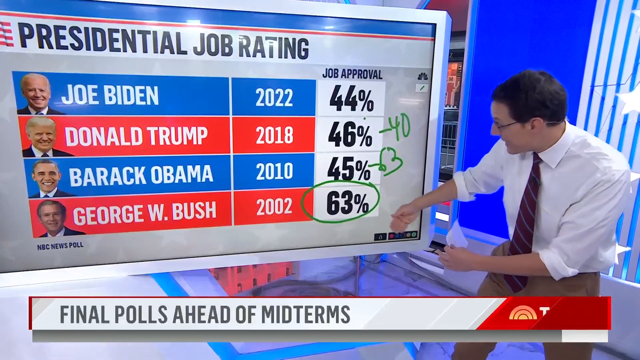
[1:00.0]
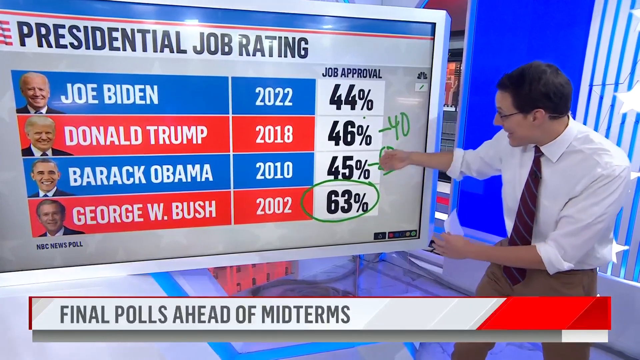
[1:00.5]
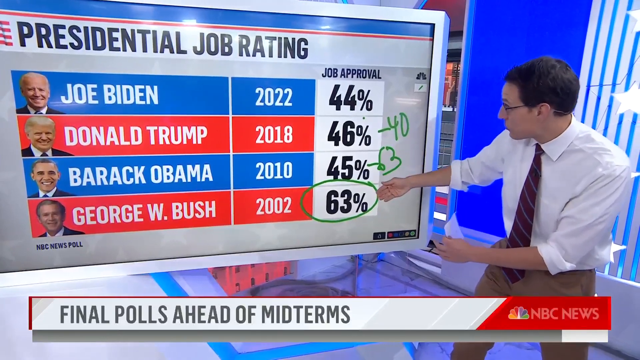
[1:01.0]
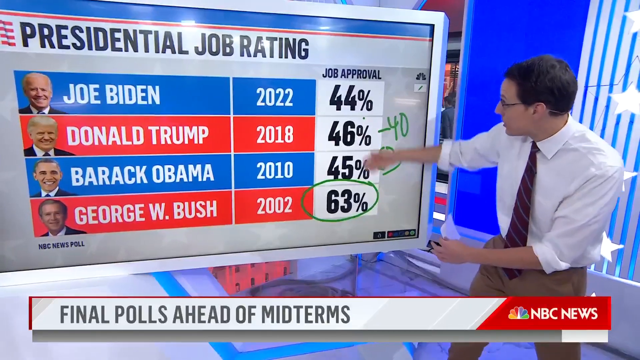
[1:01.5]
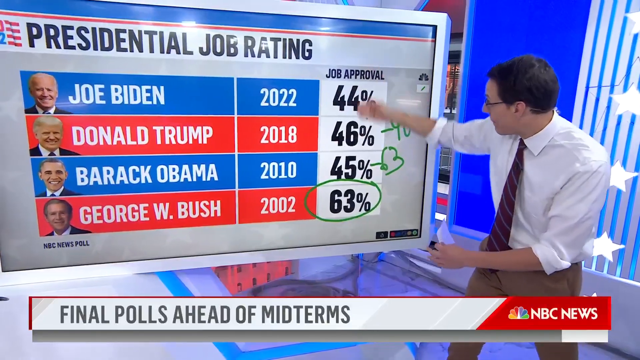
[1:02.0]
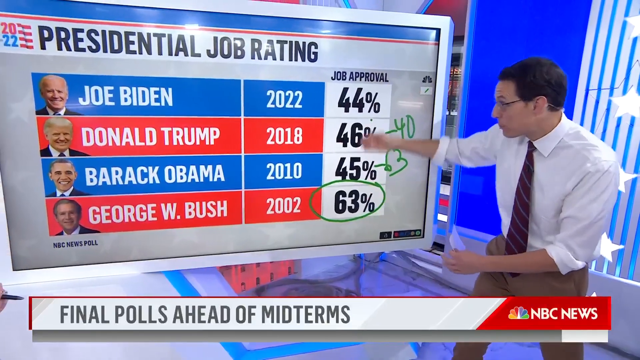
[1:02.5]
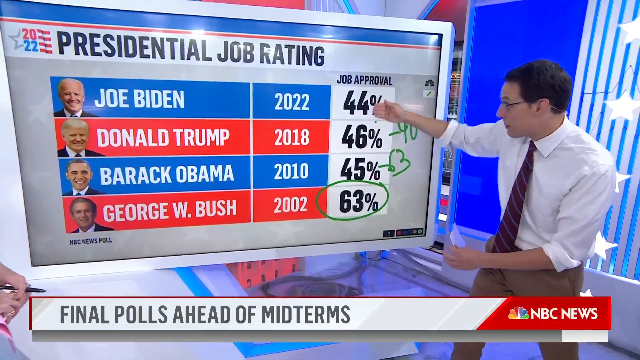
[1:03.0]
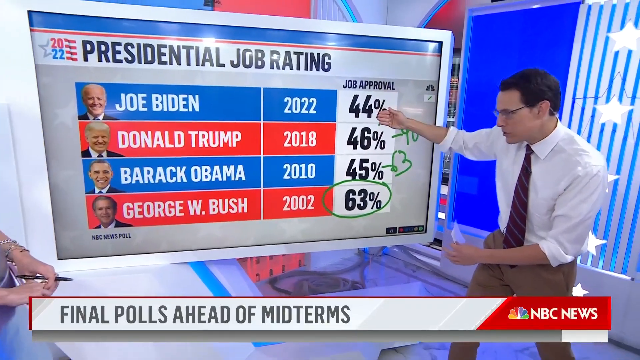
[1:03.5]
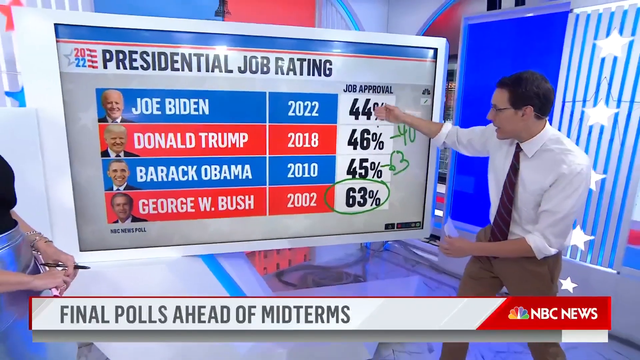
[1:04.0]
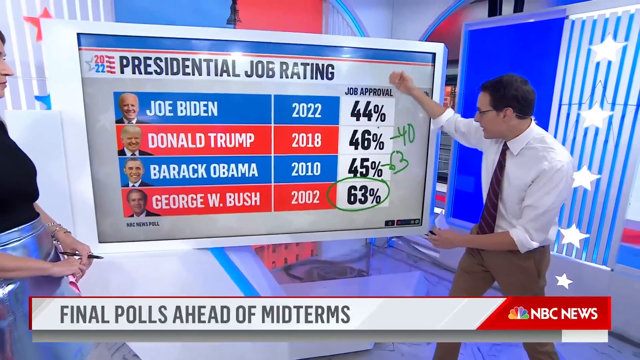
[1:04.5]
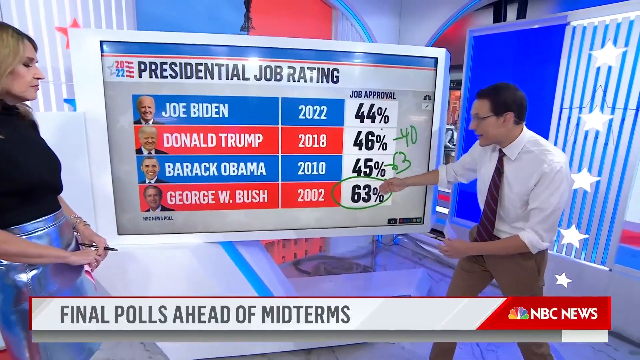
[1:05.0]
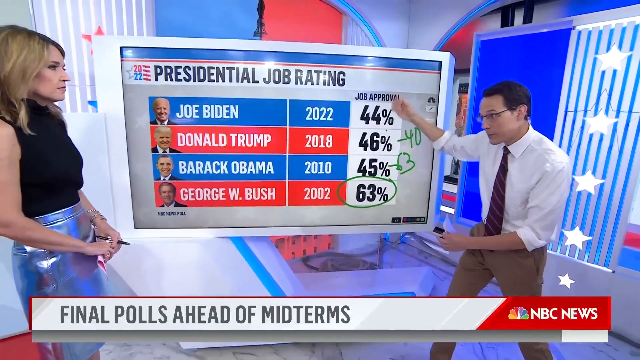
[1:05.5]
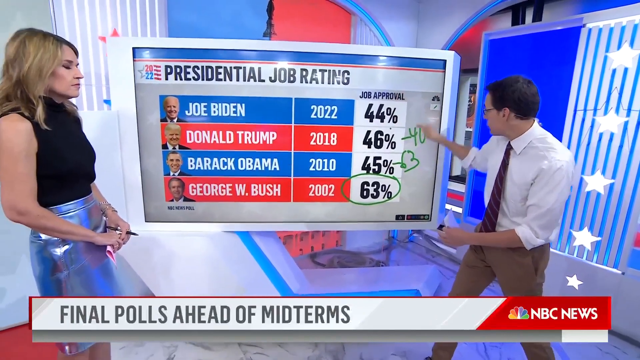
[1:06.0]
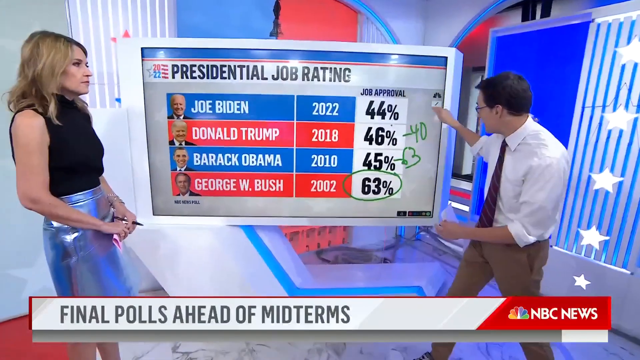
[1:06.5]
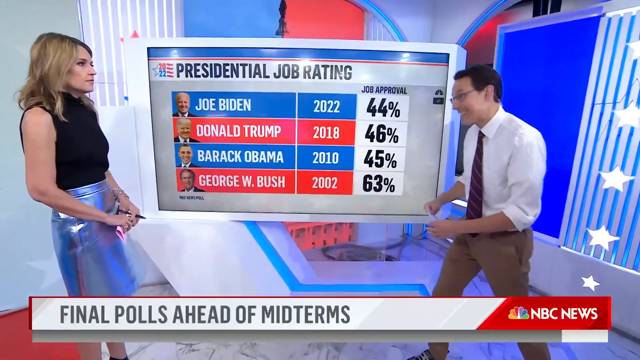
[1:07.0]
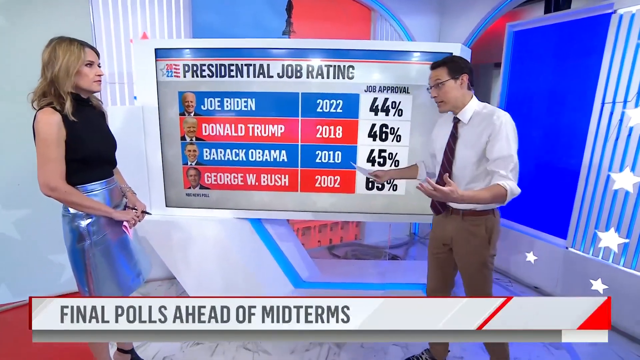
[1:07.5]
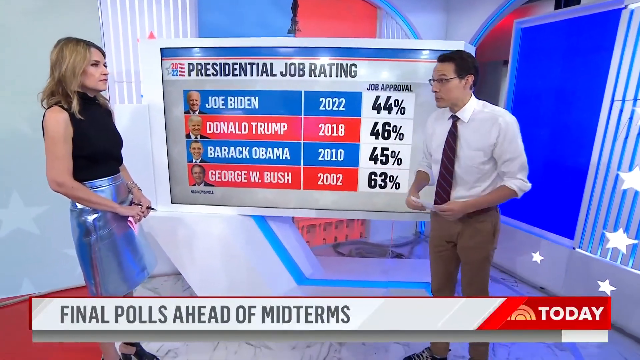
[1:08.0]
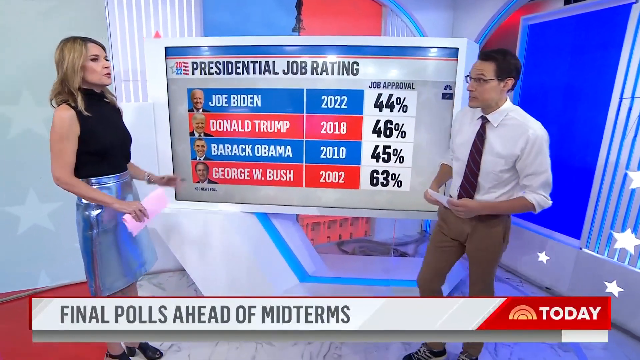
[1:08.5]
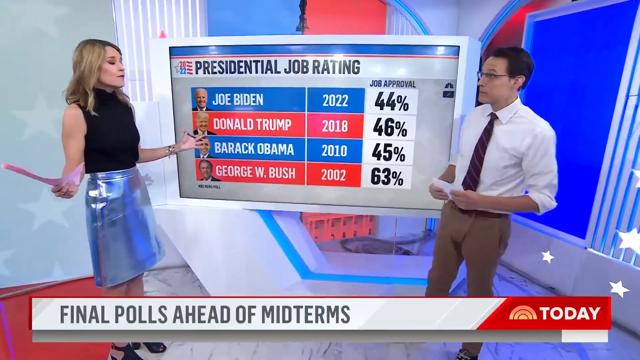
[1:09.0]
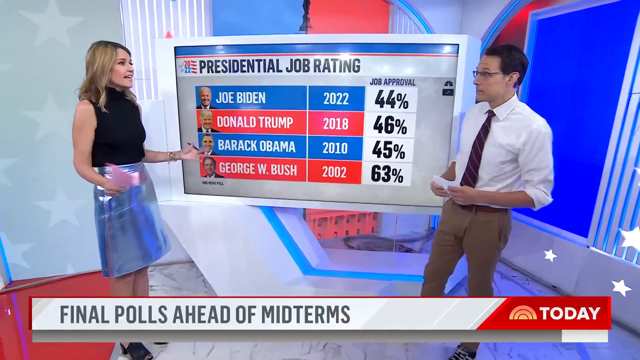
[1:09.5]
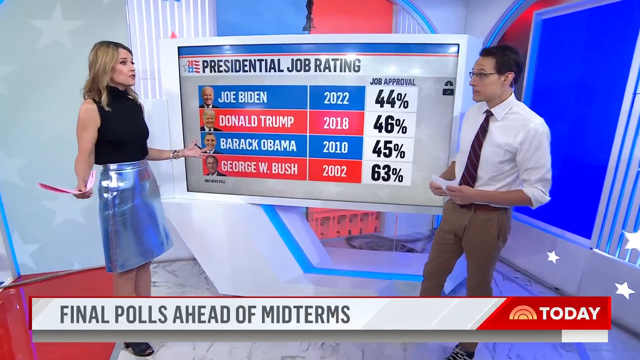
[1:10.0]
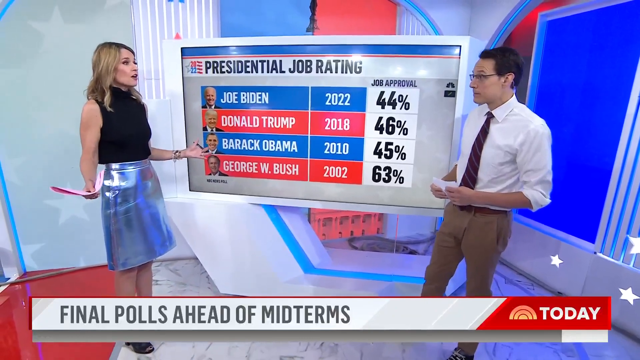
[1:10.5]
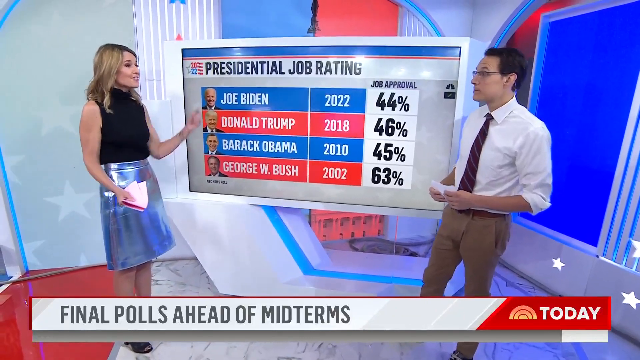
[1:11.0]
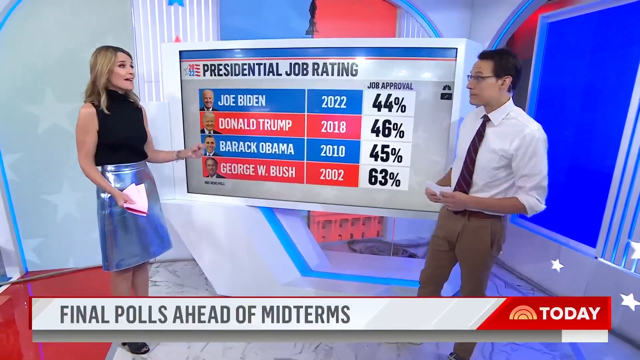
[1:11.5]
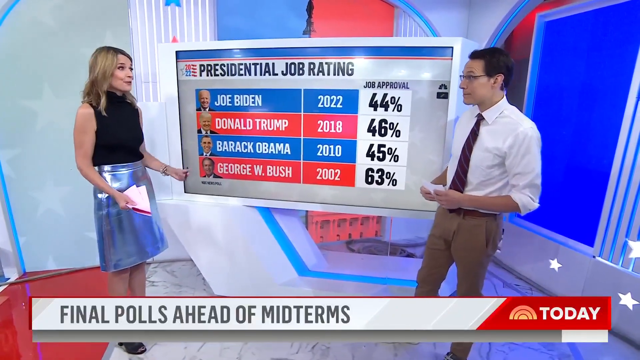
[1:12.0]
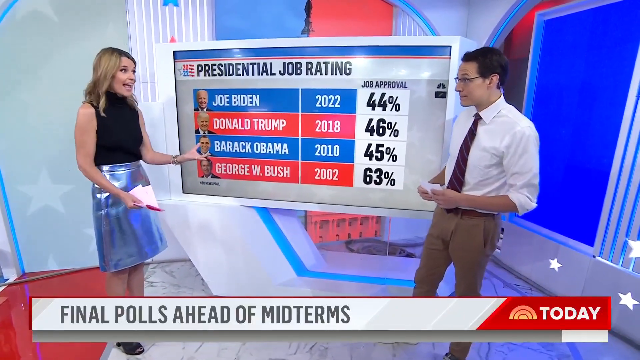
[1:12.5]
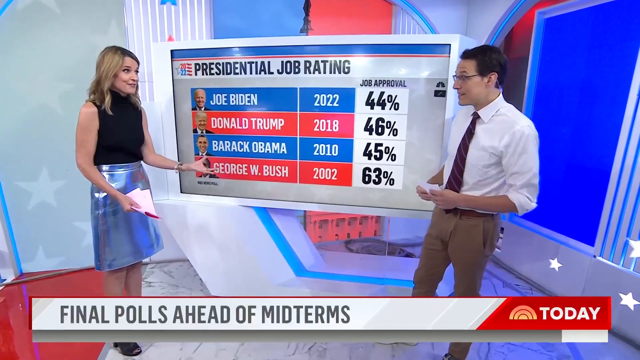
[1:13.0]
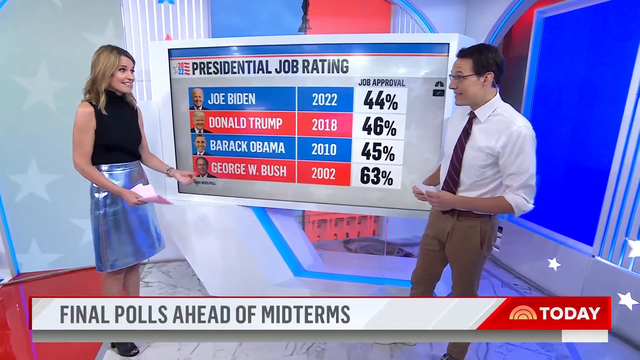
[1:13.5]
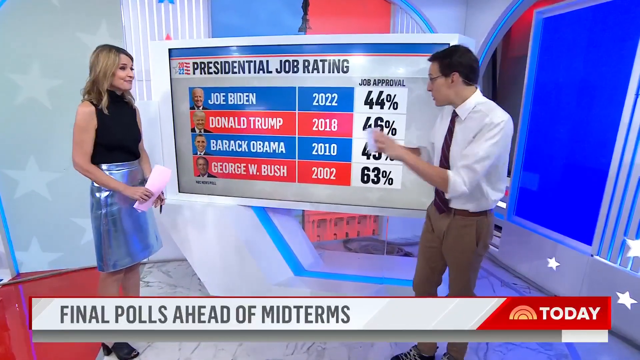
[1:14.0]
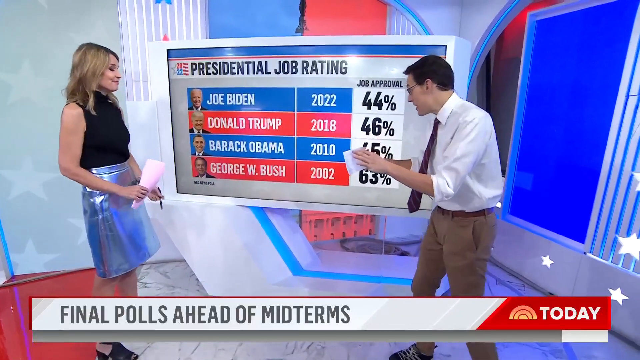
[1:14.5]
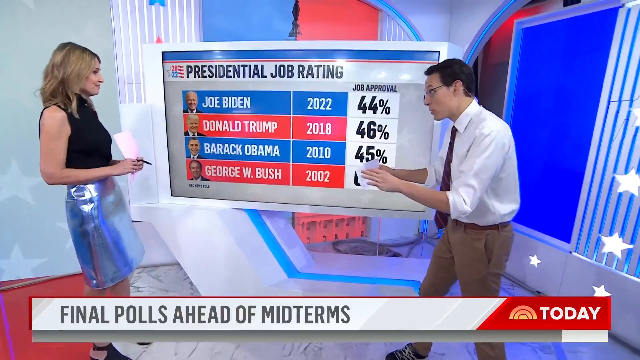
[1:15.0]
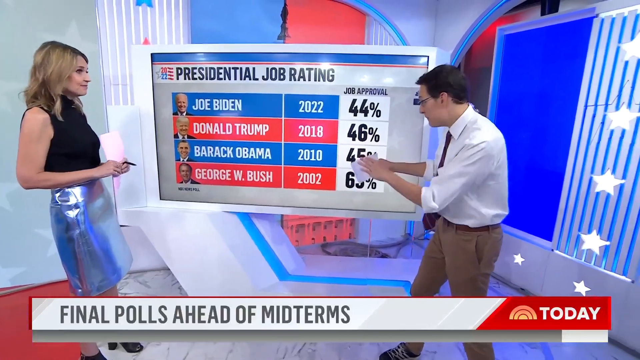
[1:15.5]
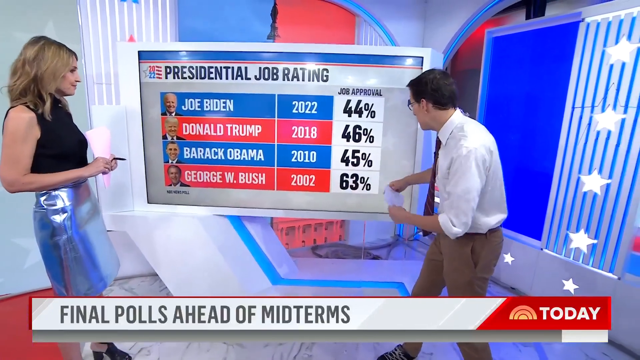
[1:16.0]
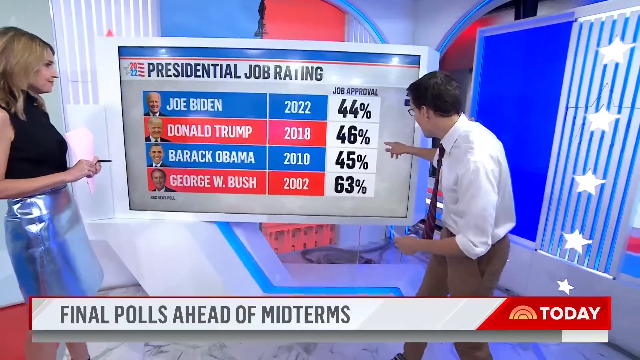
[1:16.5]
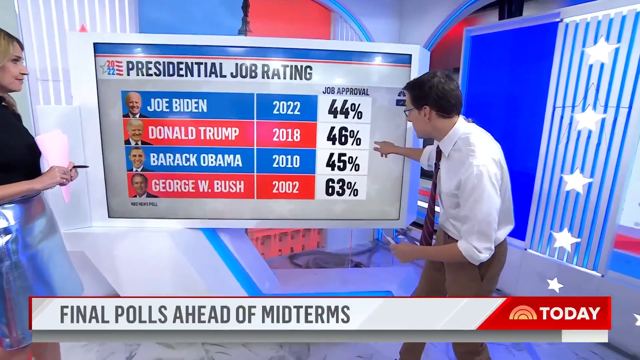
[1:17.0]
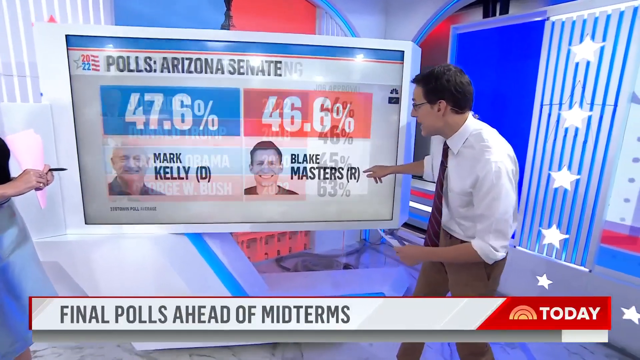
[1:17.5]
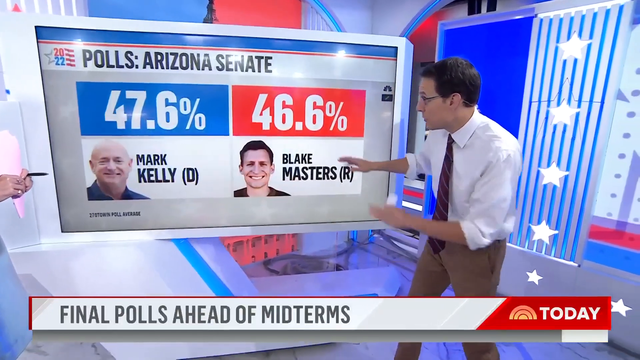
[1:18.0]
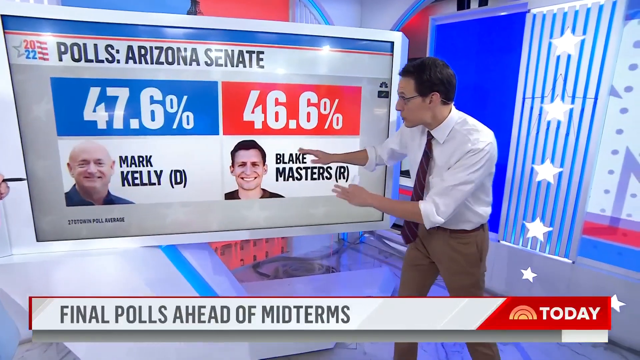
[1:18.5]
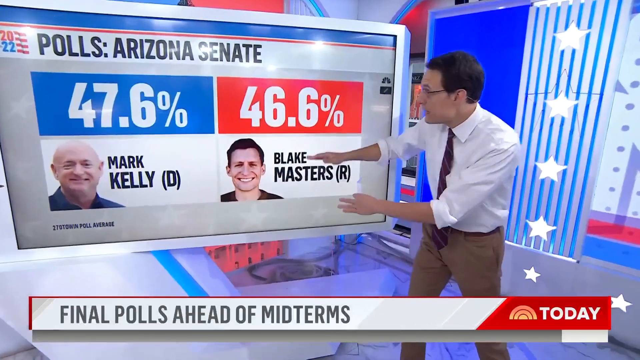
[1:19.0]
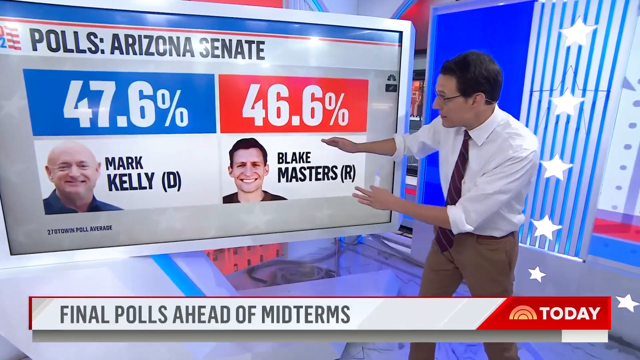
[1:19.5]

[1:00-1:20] The man has circled 60% on George Bush's job approval rating and gestures up and down on the screen. The shot goes back to the woman speaking while he listens intently to her. Next a screen reads "polls Arizona Senate," showing 47% for Mark Kelly, a Democrat, and 46.6% for Blake Masters, a Republican. The focus is mostly on the man, with the woman seen a little. The studio is brightly lit, with blue, red and white colors and black words that are easy to read.